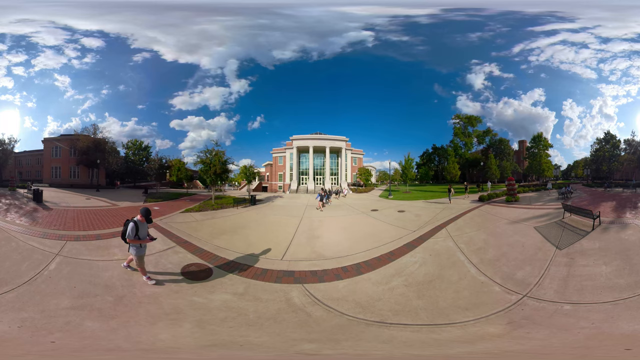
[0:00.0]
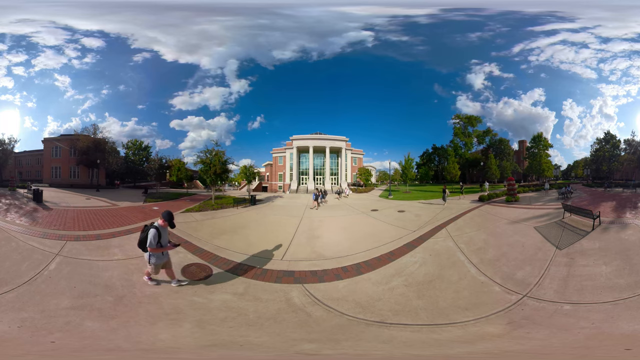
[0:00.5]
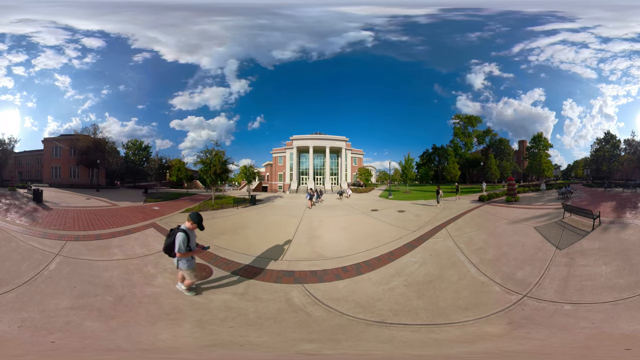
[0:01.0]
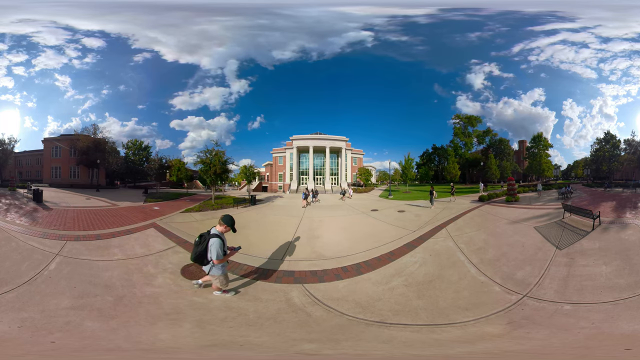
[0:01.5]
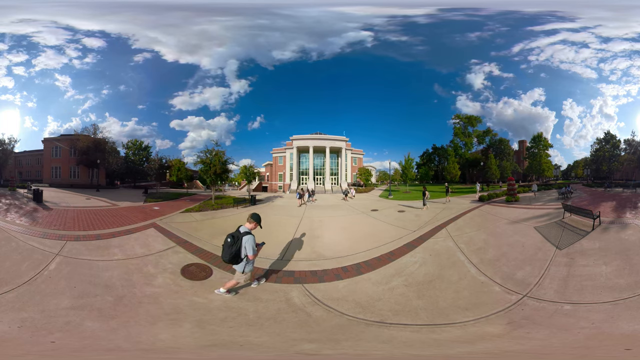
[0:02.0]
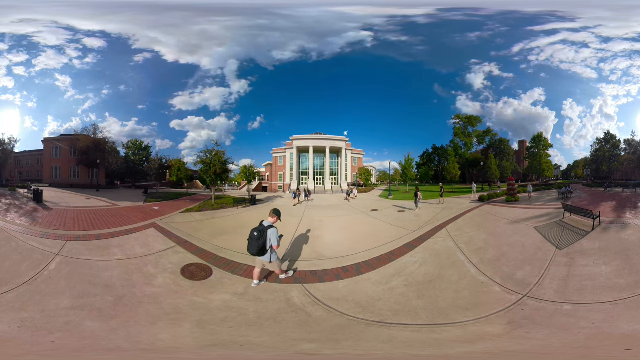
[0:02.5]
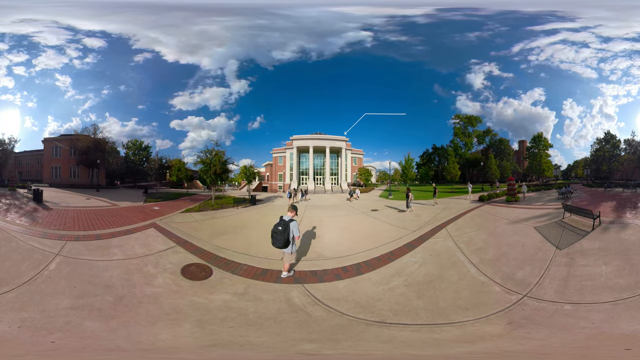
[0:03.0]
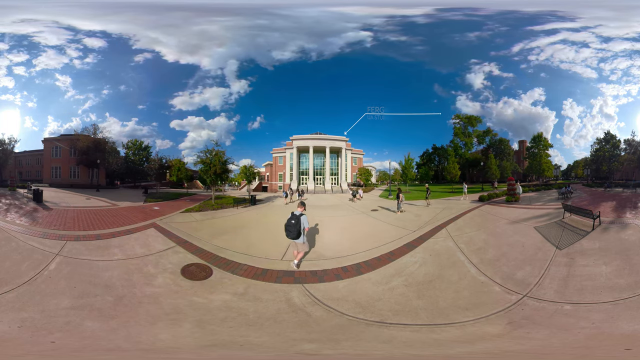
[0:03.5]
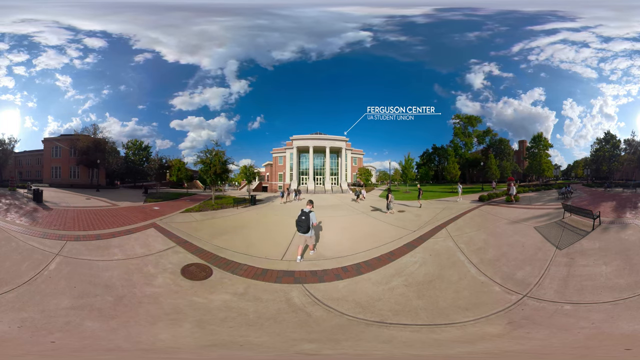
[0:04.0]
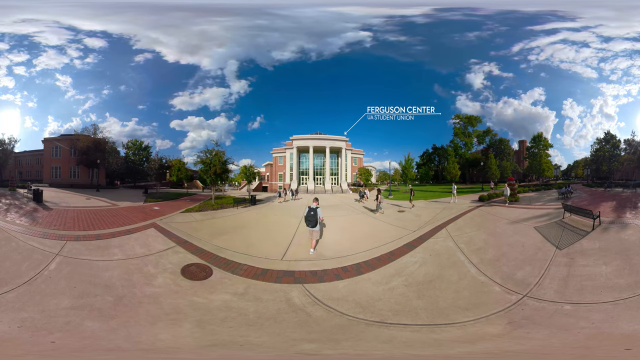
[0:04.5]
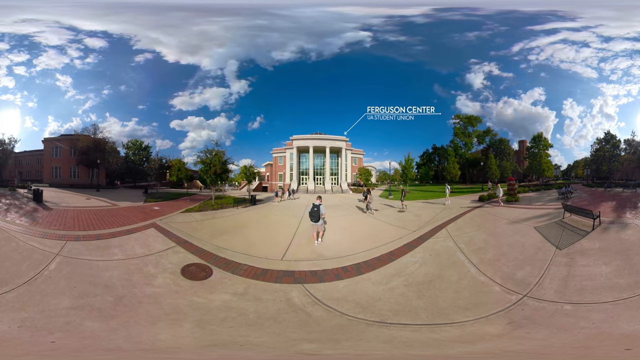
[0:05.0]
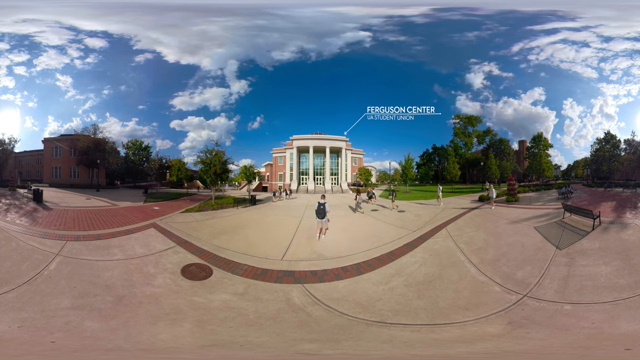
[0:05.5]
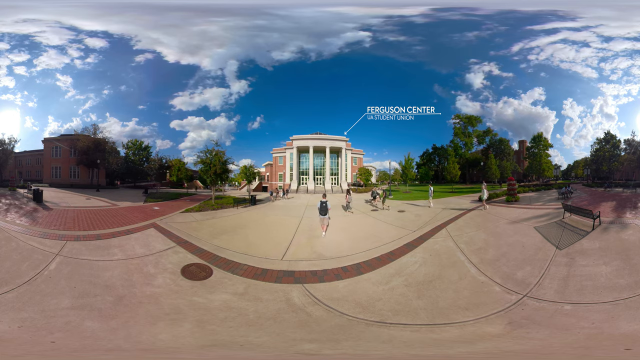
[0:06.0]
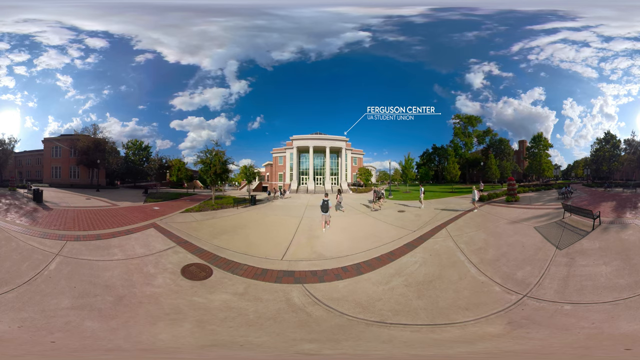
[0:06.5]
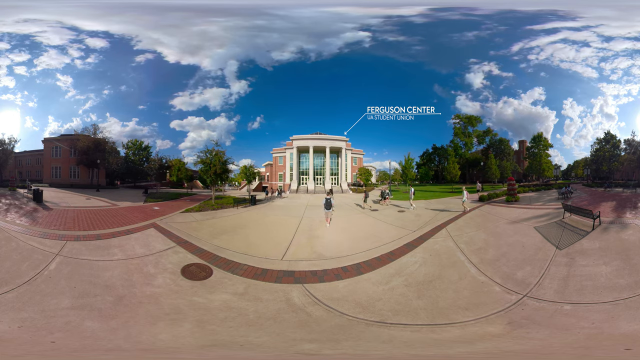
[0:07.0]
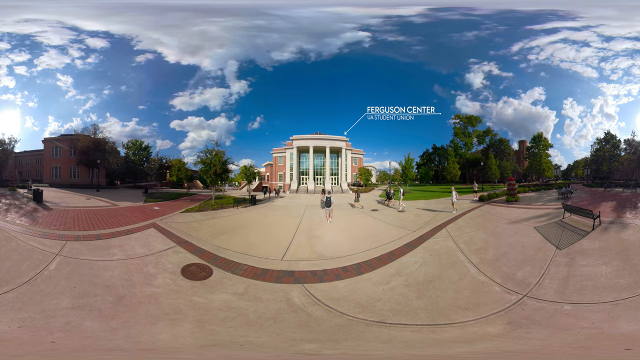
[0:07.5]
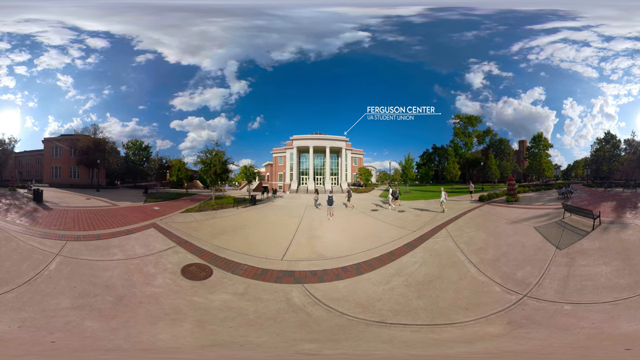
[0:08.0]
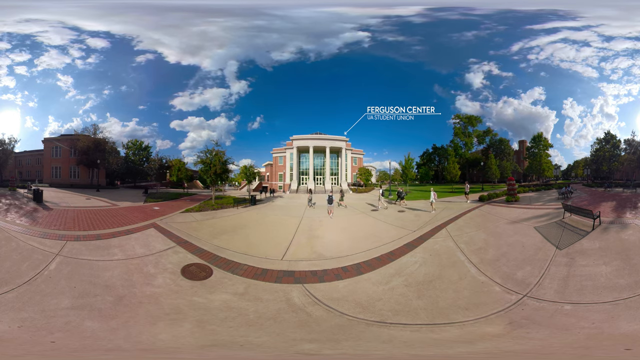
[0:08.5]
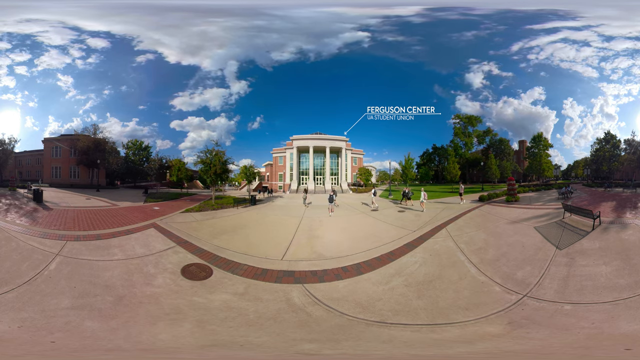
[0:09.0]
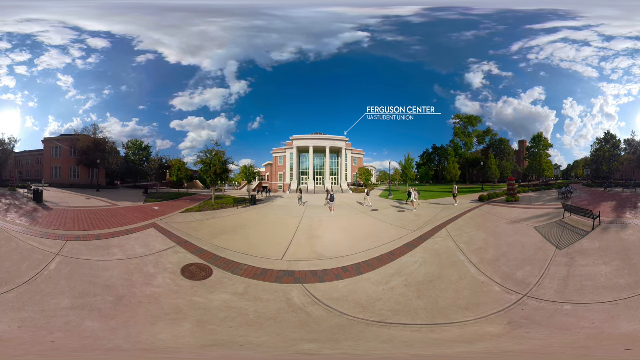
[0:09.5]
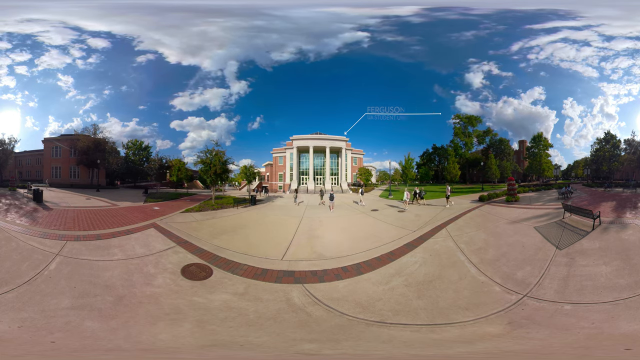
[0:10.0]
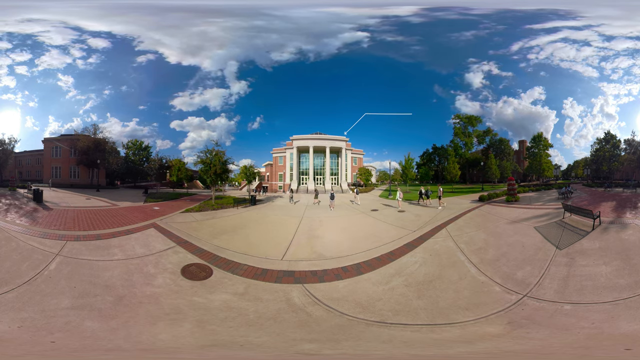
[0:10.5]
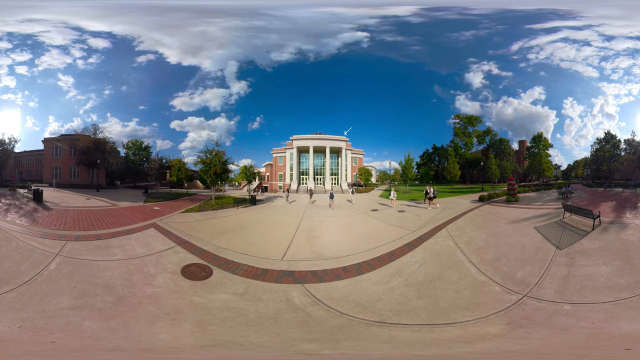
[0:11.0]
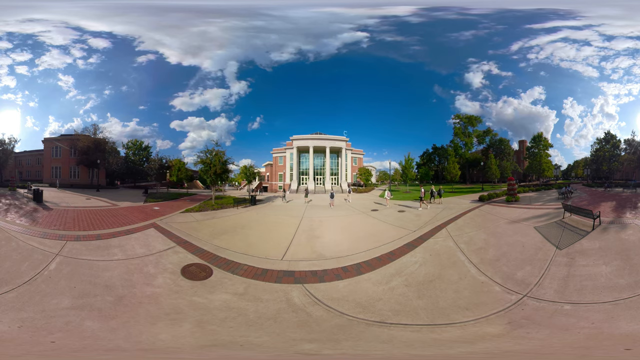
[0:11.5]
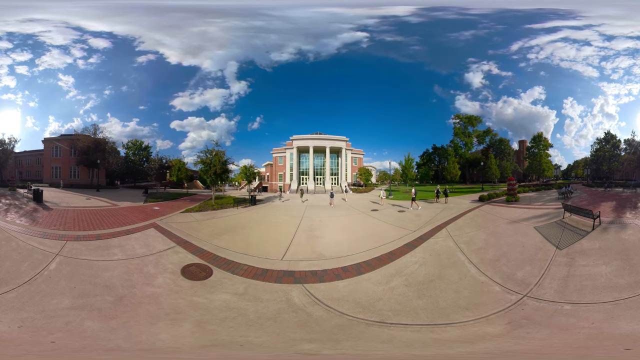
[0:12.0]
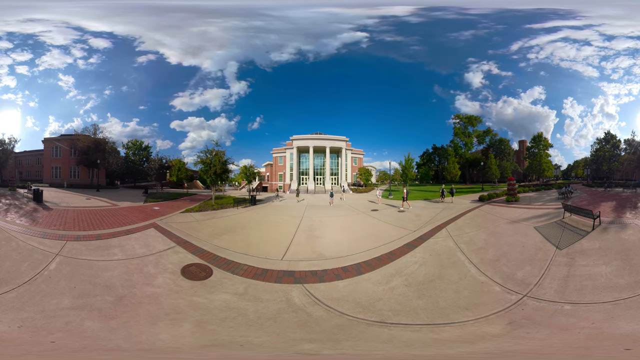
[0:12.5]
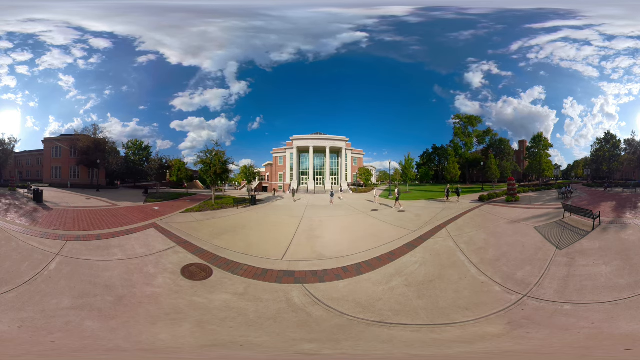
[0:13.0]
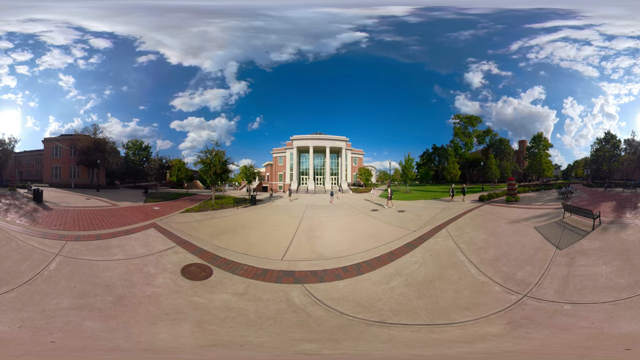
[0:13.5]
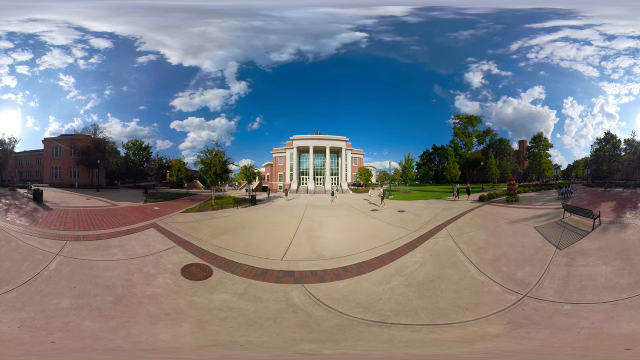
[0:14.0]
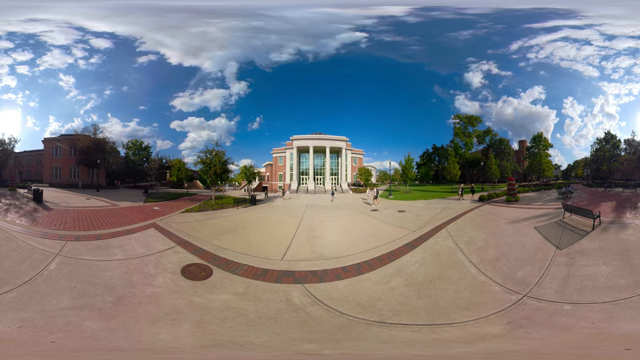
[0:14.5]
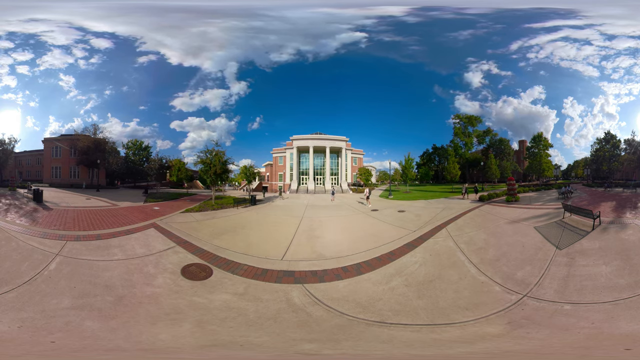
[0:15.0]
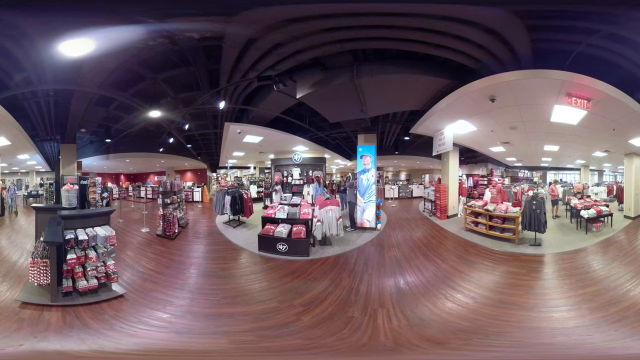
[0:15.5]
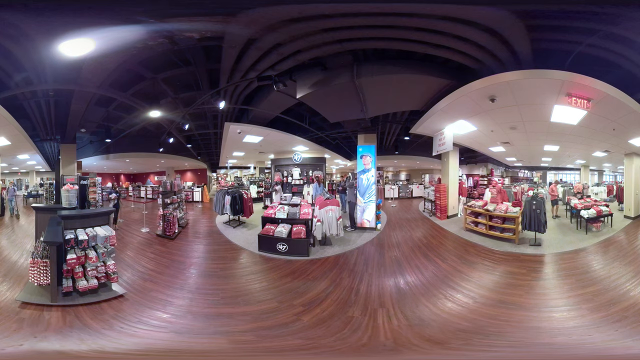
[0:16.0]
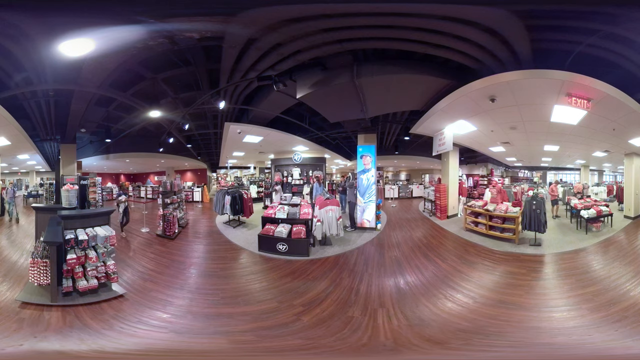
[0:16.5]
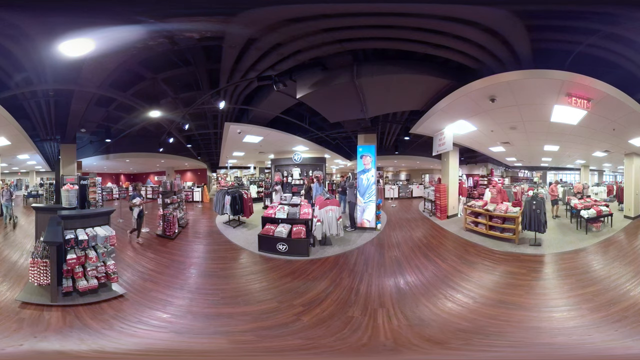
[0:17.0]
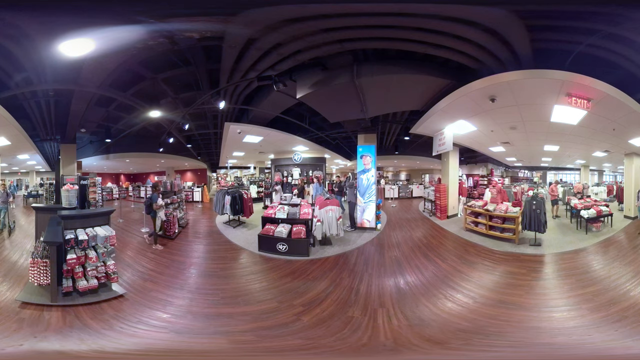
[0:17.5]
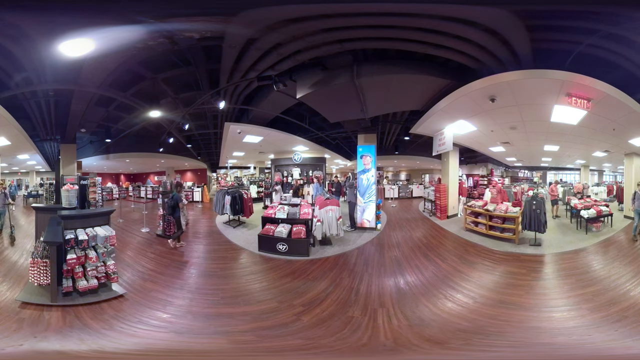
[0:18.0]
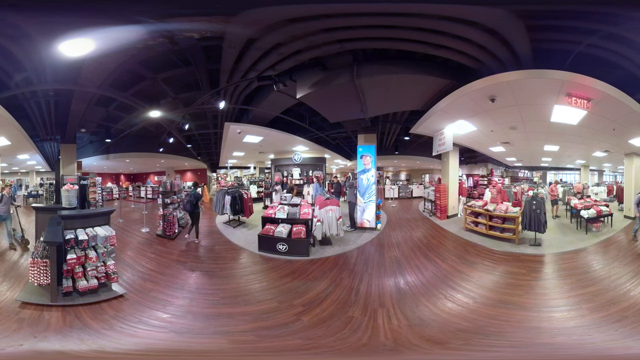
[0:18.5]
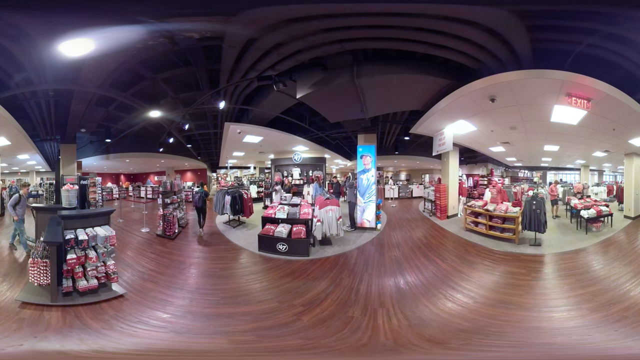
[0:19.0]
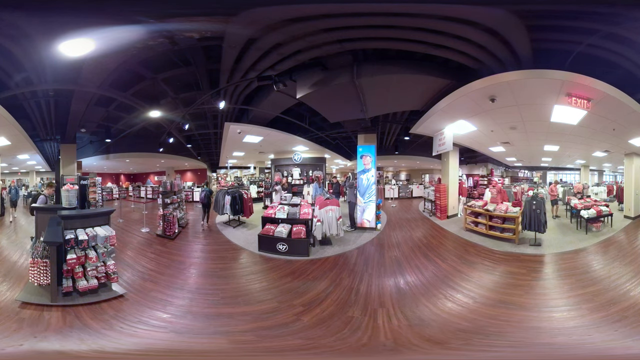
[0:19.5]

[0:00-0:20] A building with a very large, wide sidewalk appears; it is unclear whether it is a school or a library, and it could be a building on a university campus. Several students or people walk around, many with large backpacks on their backs, some in black and one girl's in tan; almost everyone seems to have a backpack. The camera is stationary, observing the activity. The view then goes inside, to a space that looks like a convention center because of a tall vertical banner. Some white line or mark seems to point to something on the building, along with a square, with no explanation for it. The interior is possibly a university store or a sports store, with sporting goods, clothes and other merchandise for sale, and several people milling about.